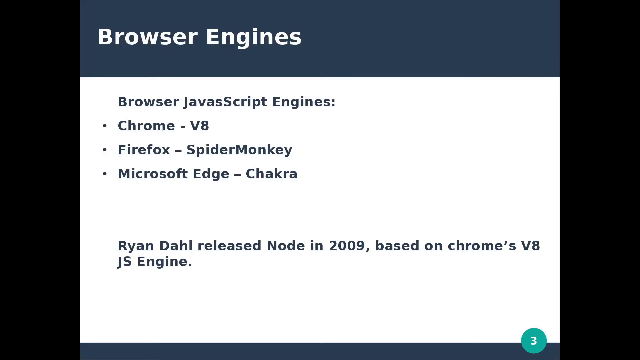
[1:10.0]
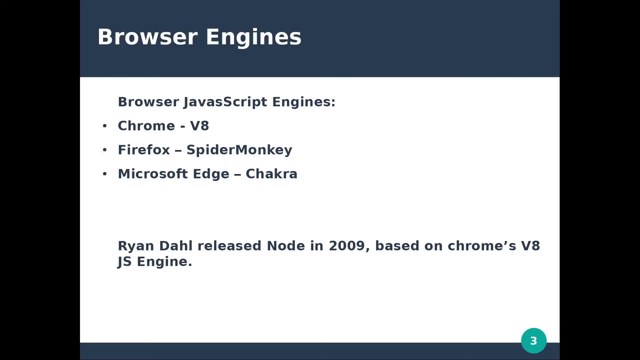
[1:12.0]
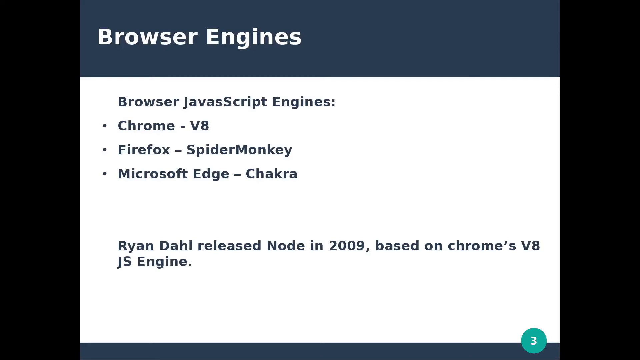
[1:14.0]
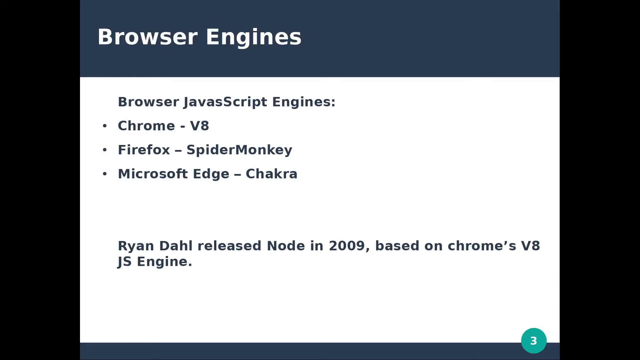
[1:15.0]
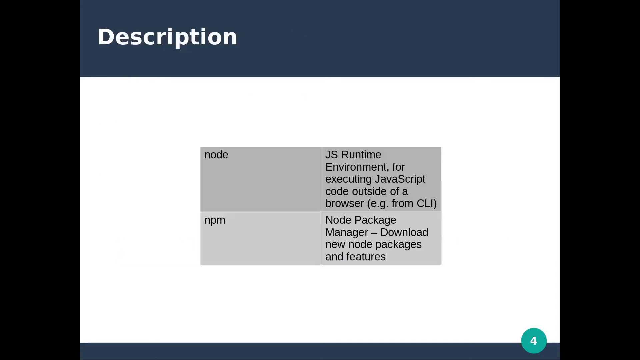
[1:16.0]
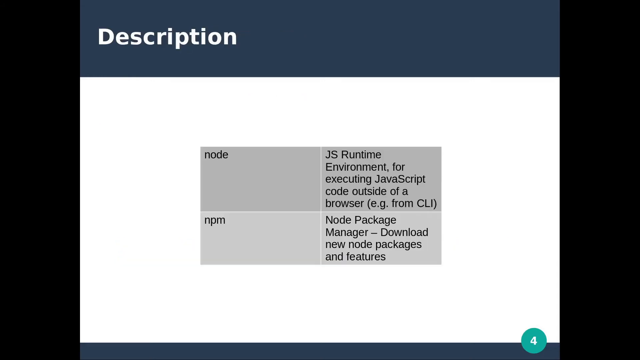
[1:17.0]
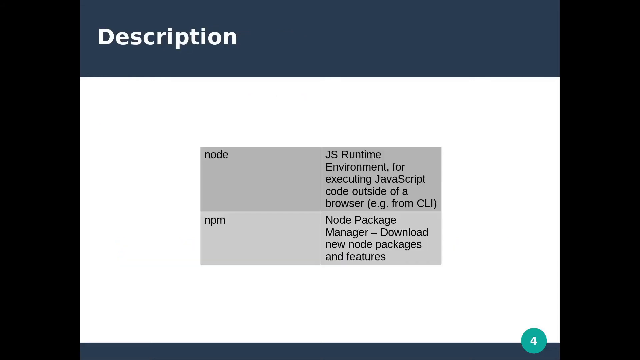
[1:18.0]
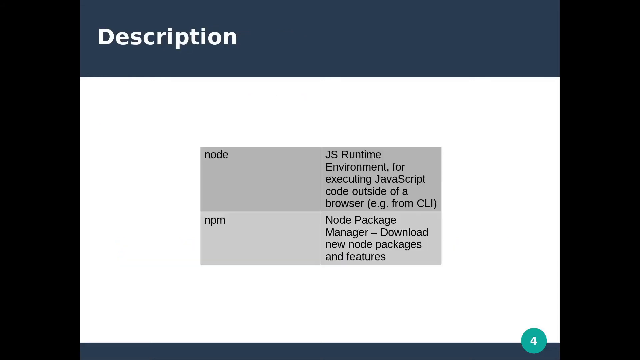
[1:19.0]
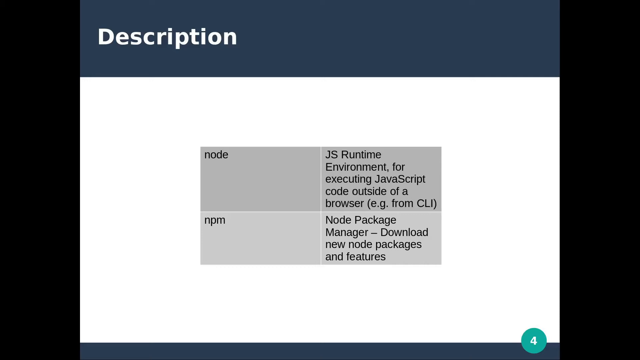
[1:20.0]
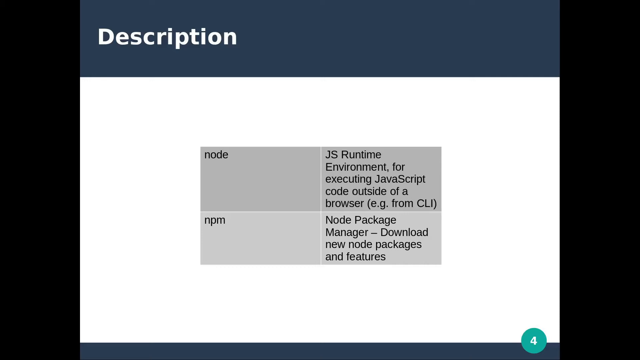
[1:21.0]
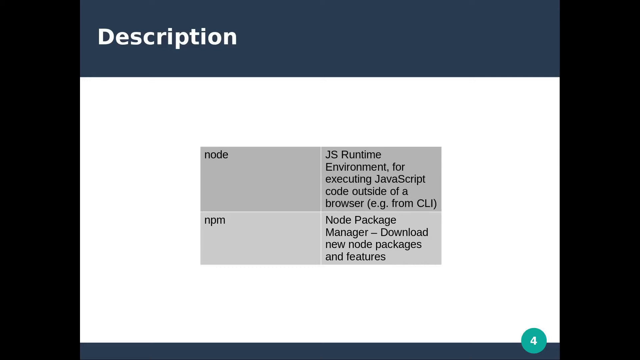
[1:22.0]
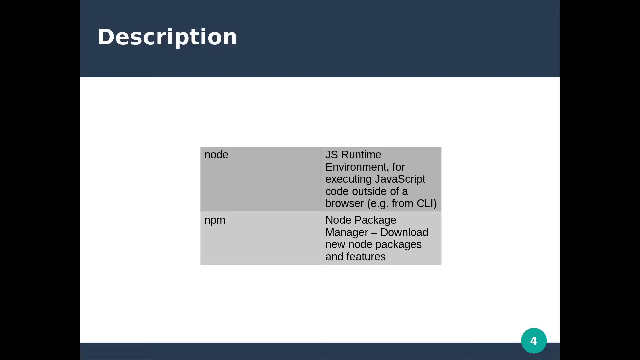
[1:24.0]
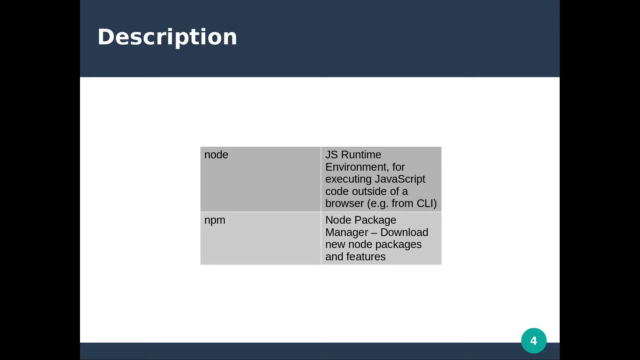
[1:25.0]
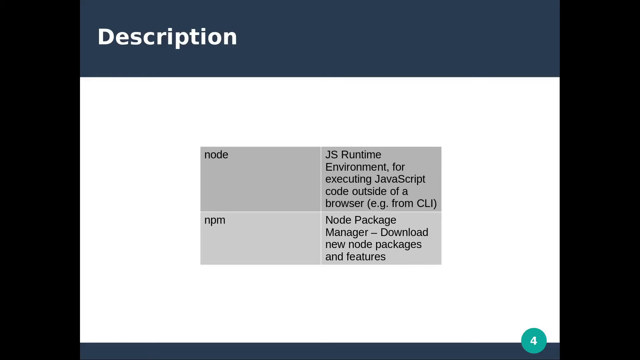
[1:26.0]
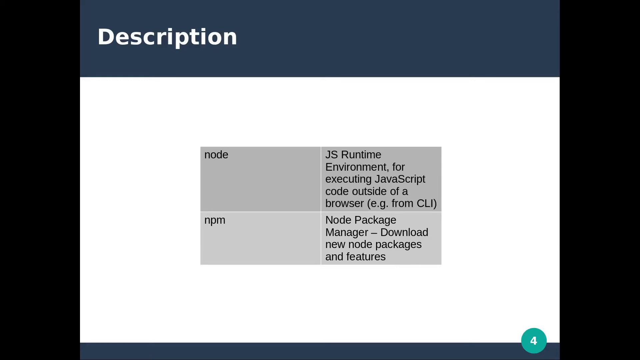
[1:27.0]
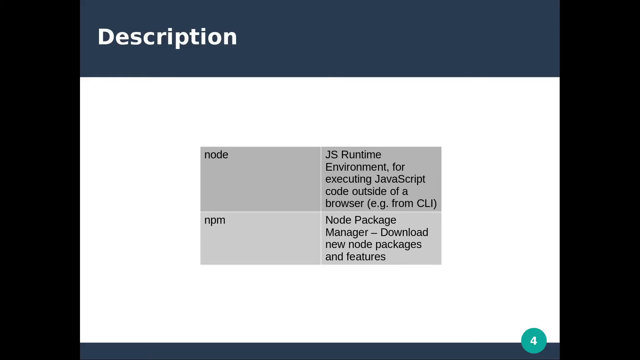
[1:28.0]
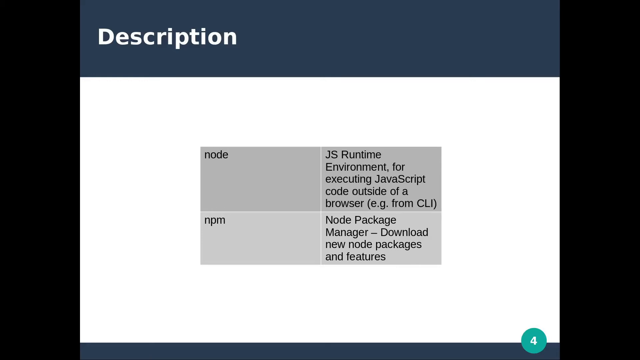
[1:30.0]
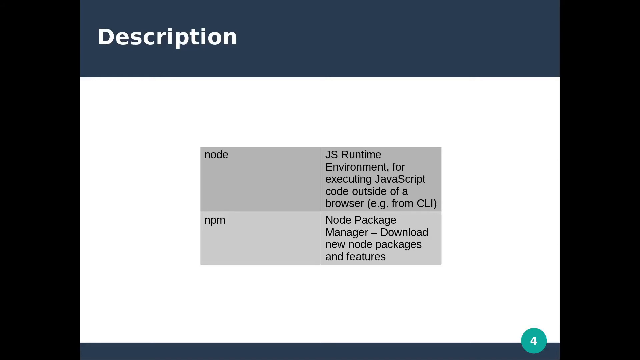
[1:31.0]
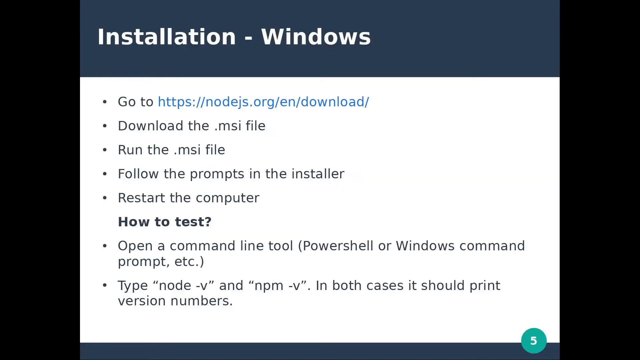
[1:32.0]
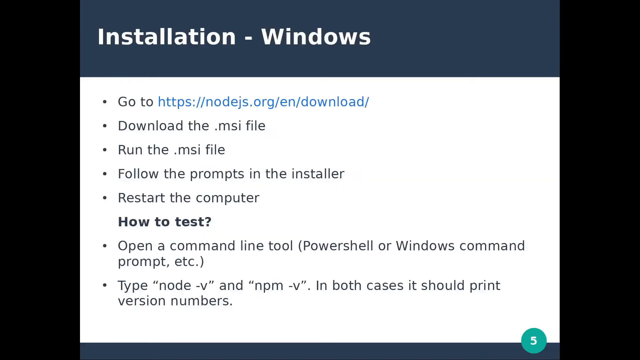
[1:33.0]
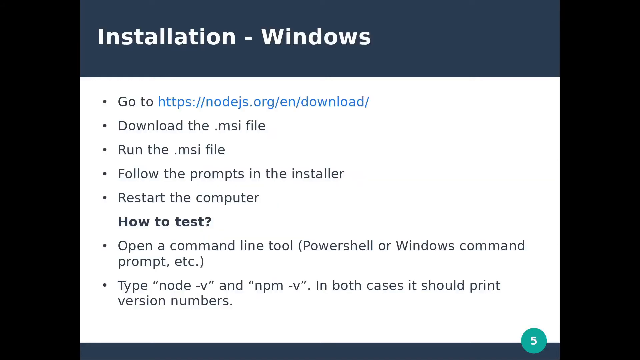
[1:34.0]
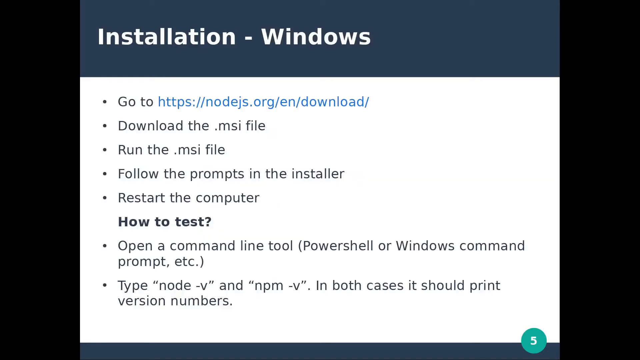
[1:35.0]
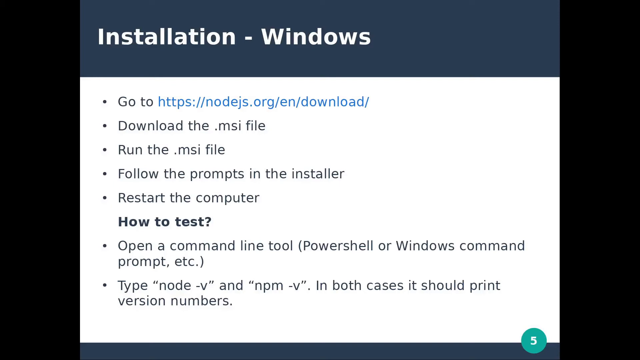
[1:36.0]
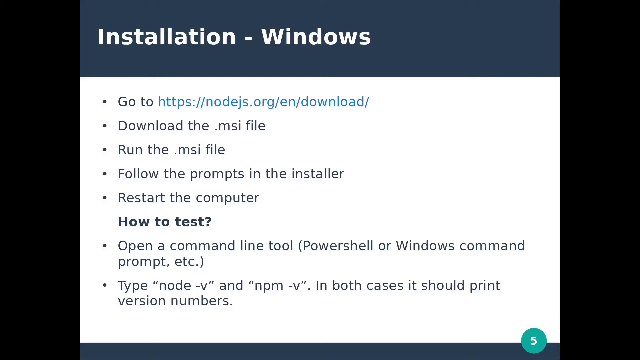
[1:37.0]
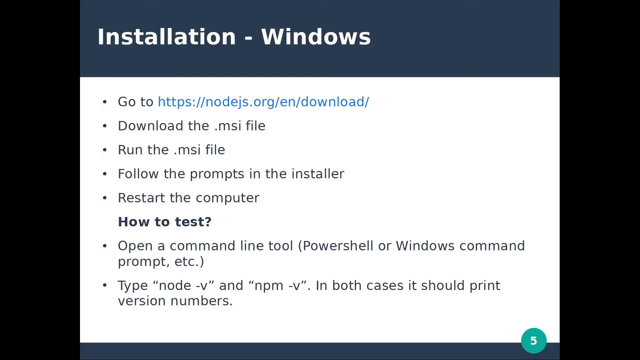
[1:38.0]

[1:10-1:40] The "Browser Engines" screen is still shown, reading "browser JavaScript Engines: Chrome - v8, Firefox - SpiderMonkey, Microsoft Edge - Chakra" with the subtext "Ryan Dahl released Node in 2009 based on Chrome's V8 JS Engine". The next screen is headed "Description" and has a couple of text boxes against a gray background. The top box reads "node JS runtime environment, for executing JavaScript code outside of a browser, (e.g. from CLI)" and the next reads "npm, Node Package Manager, download new node packages and features". Then a screen headed "Installation-Windows" appears, with bullet points reading "go to https://nodejs.org/en/download/", "download the .msi file", "run the .msi file", "follow the prompts in the installer" and "restart the computer". Beneath them a heading reads "how to test?" followed by "Open a command line tool".